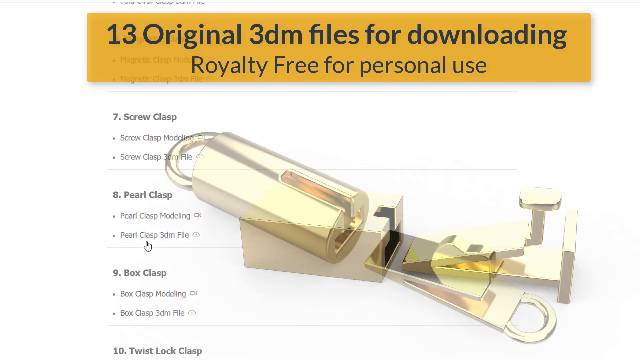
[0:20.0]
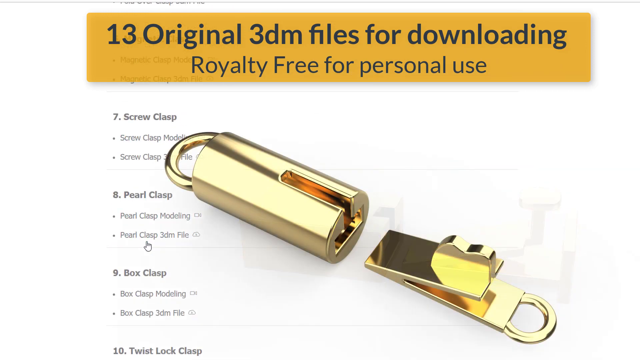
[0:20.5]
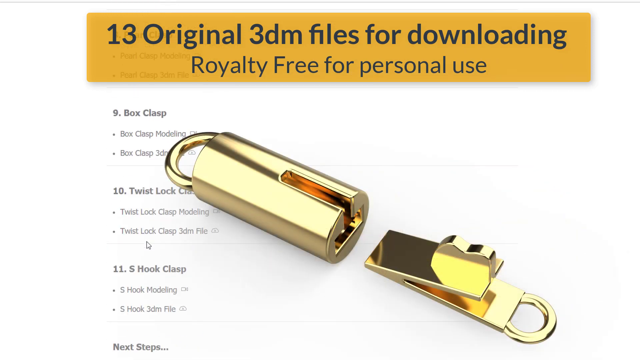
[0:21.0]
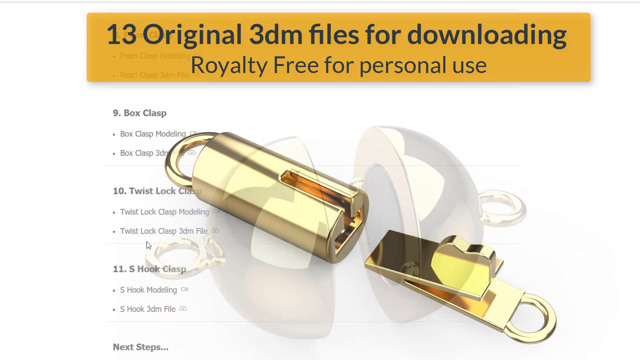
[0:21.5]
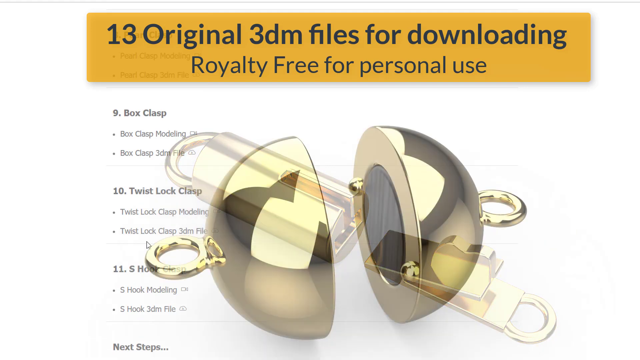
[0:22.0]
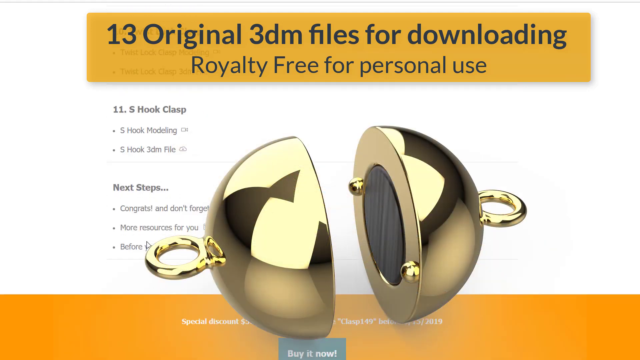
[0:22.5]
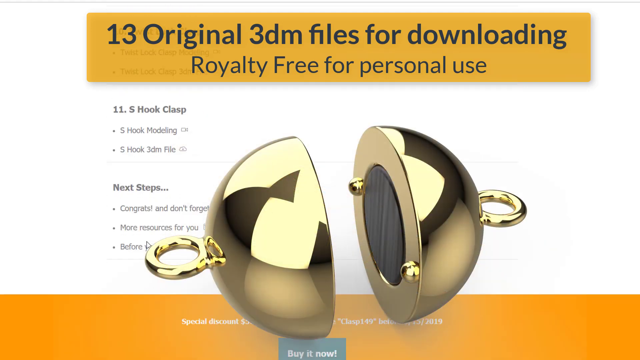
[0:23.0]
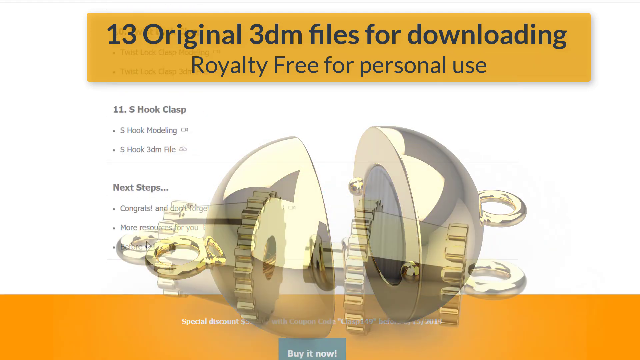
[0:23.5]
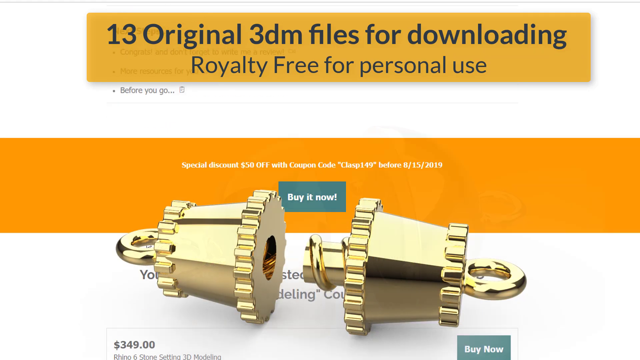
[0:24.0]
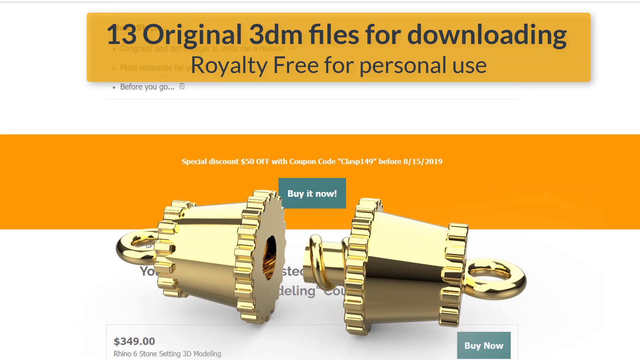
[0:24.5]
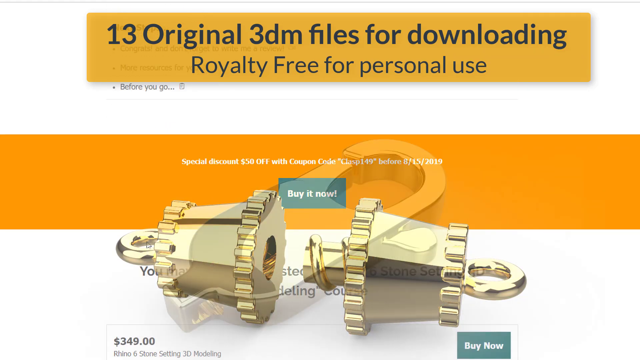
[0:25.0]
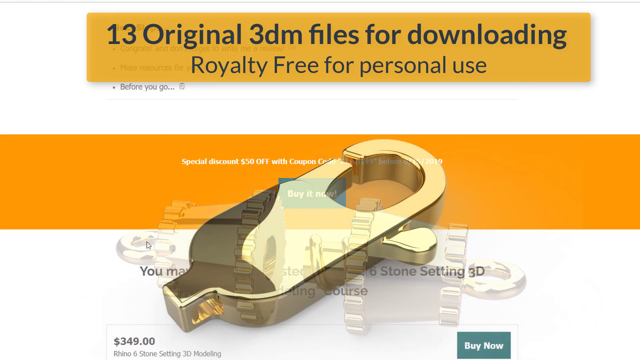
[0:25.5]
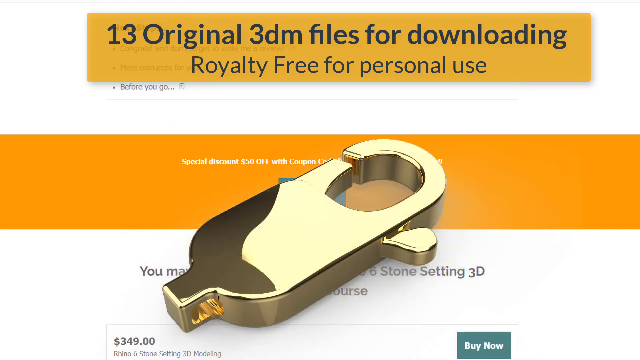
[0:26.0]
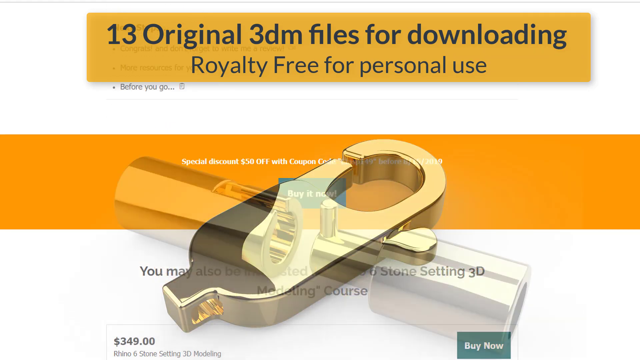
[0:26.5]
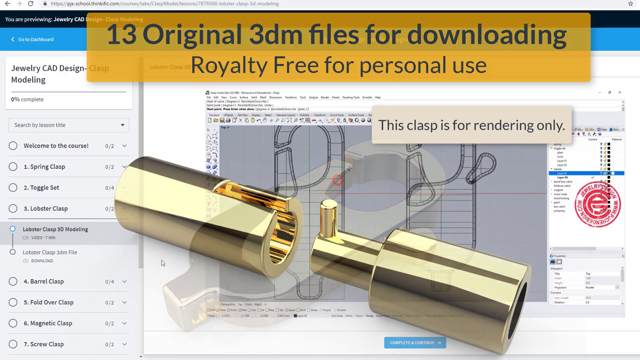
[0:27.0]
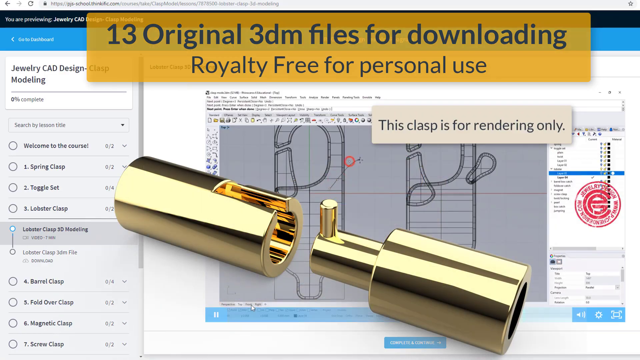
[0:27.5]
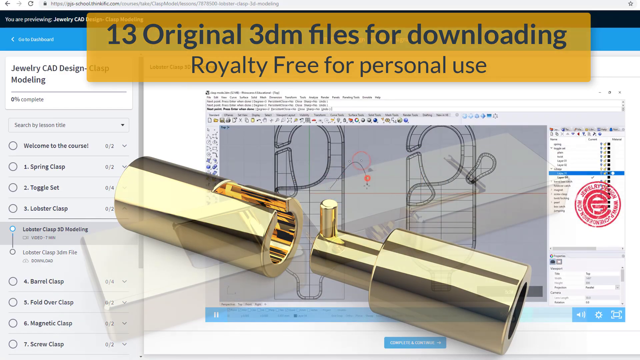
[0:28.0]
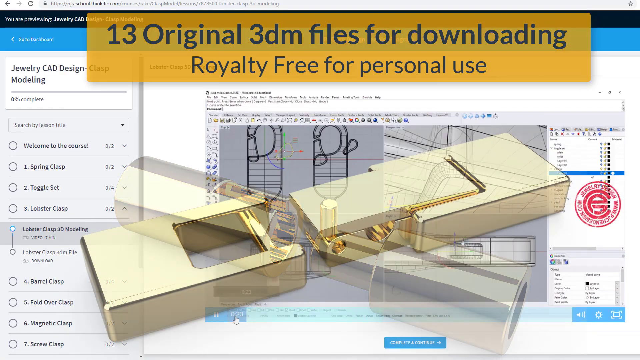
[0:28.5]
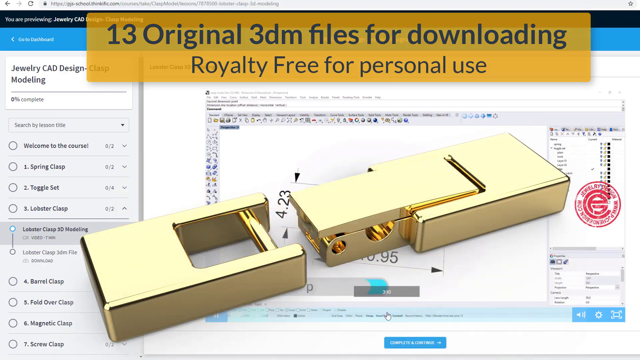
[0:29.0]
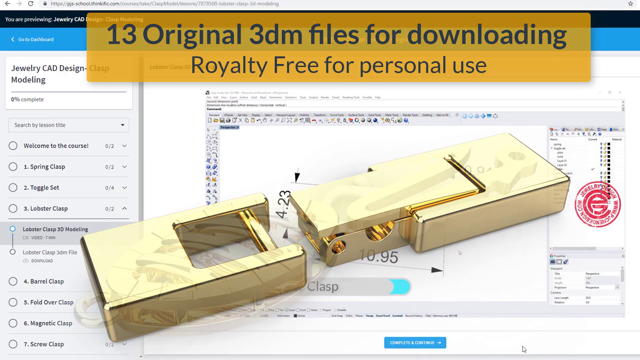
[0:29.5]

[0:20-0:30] Text at the top of the screen reads "13 original 3DM files for downloading, royalty-free for personal use." The website scrolls through the titles of files available for download, including number 7, Screw Clasp; number 8, Pearl Clasp; number 9, Box Clasp; number 10, Twist Lock Clasp; and 11, S-Hook Clasp. Clasps featured on the right side of the screen are polished-looking brass jewelry clasps. Another screen shows one of the clasps in two parts that look like they screw together in the middle. The middle of the screen reads "Special Discount $50 off with coupon code CLASP149 before 8-15-2019," with a Buy It Now button underneath. The view then changes to the website itself, with a title reading "this clasp is for rendering only," followed by the CAD design, a downloadable file for making the various clasps.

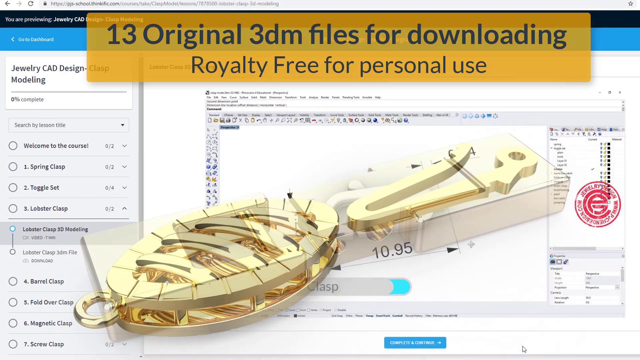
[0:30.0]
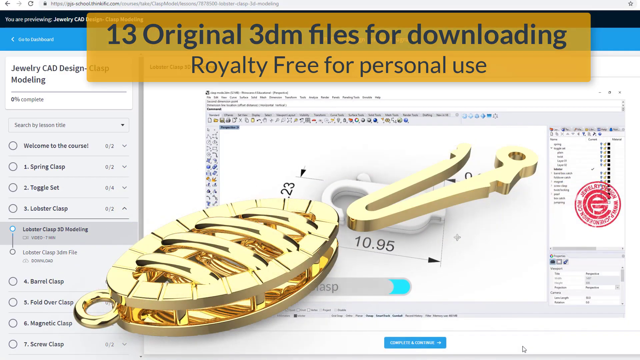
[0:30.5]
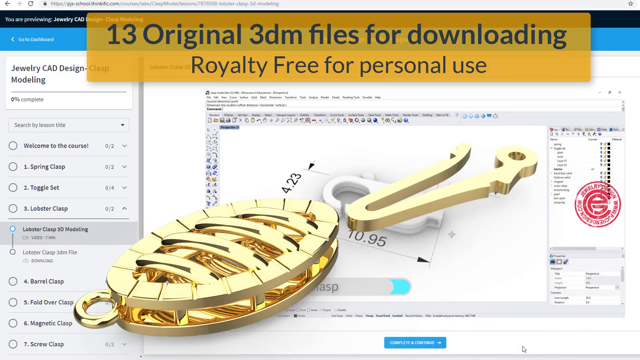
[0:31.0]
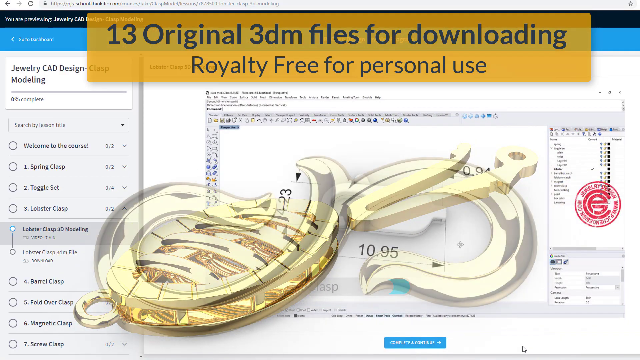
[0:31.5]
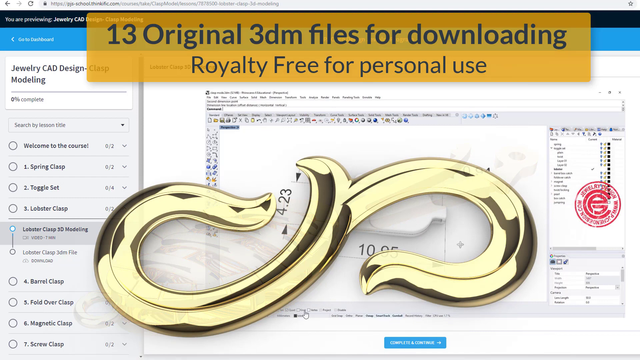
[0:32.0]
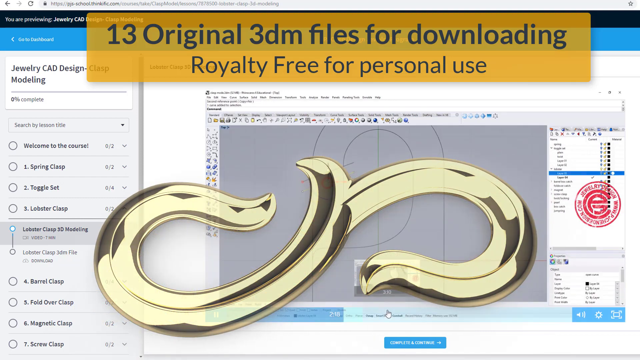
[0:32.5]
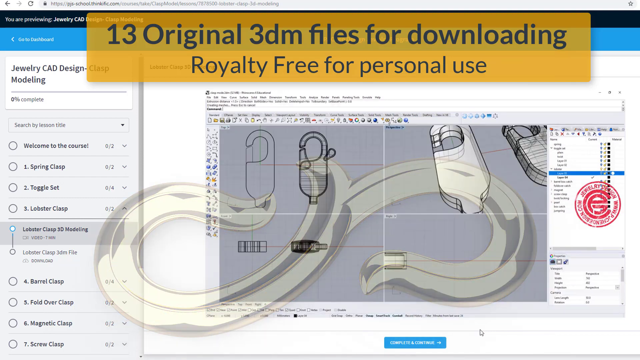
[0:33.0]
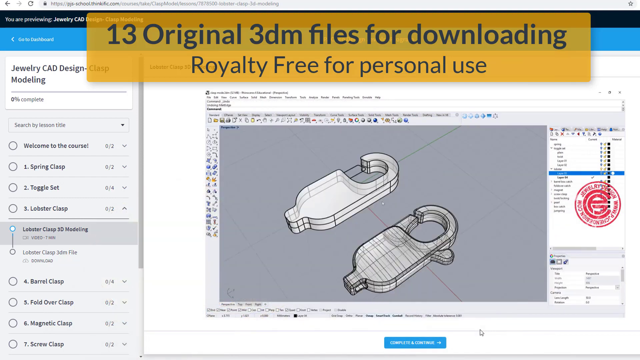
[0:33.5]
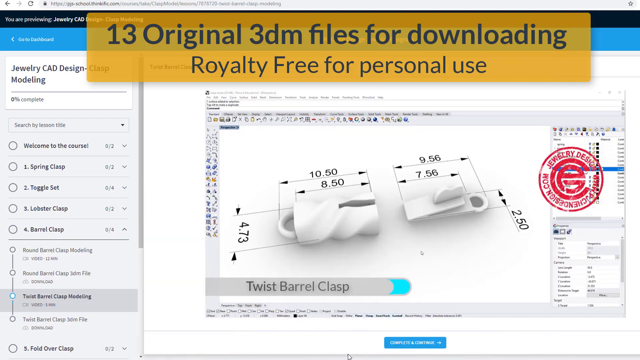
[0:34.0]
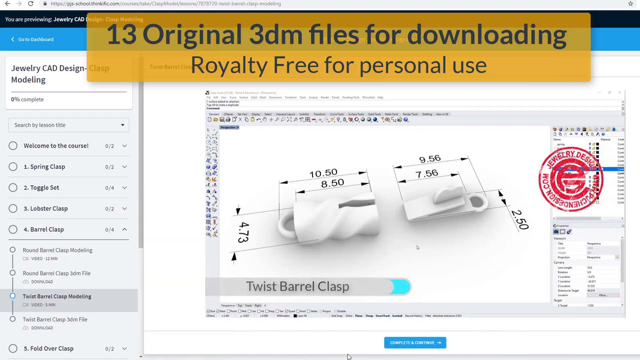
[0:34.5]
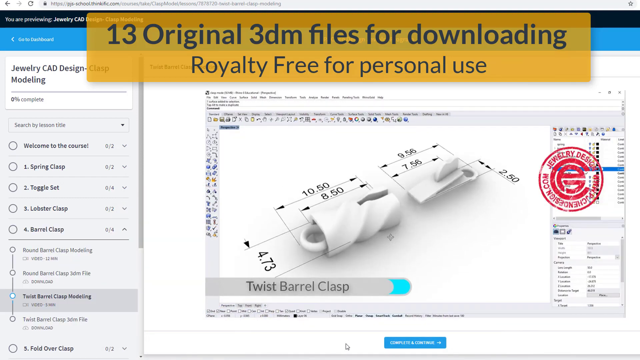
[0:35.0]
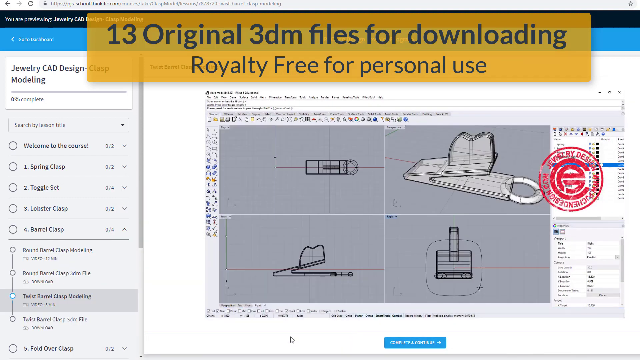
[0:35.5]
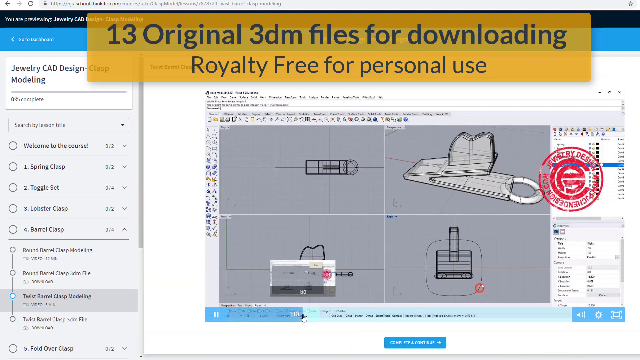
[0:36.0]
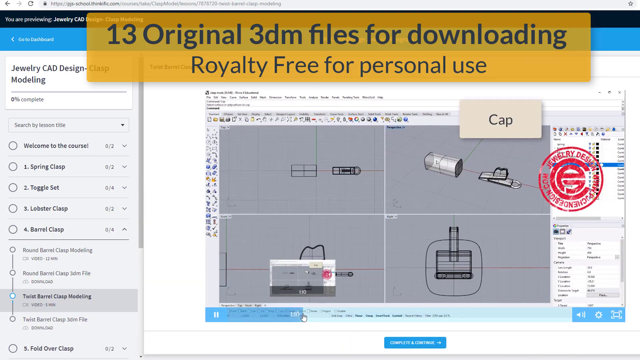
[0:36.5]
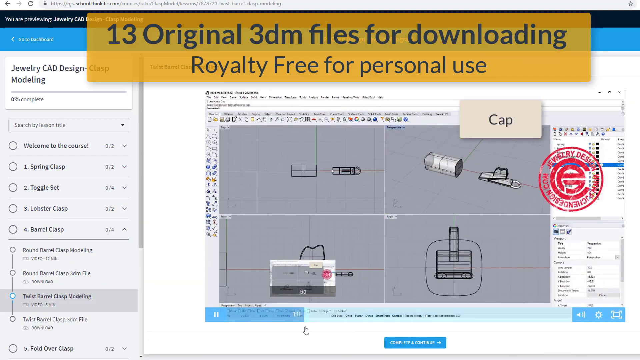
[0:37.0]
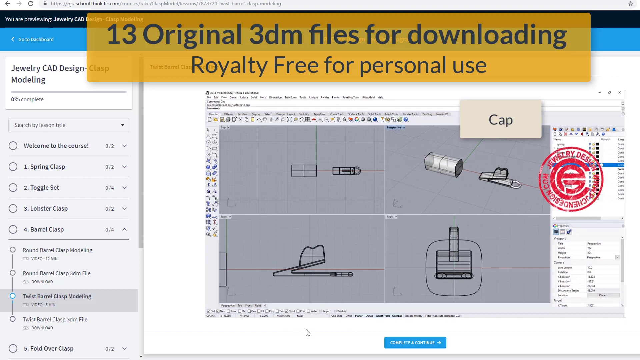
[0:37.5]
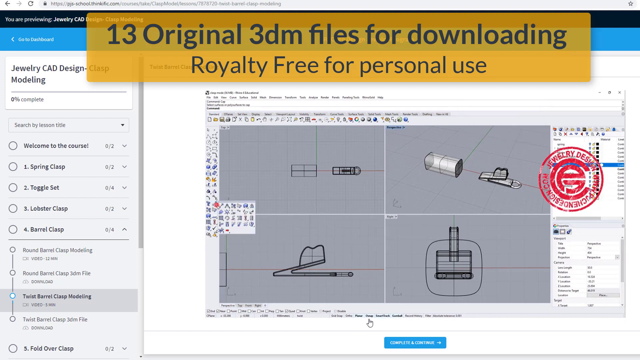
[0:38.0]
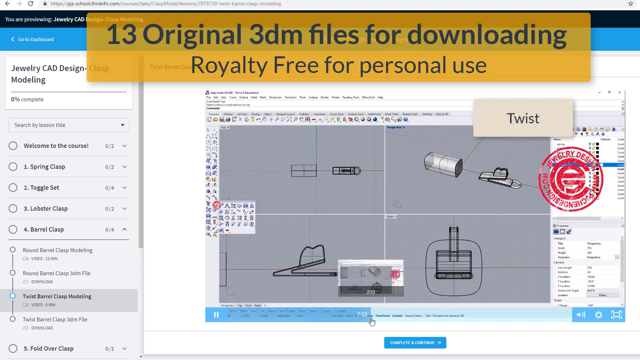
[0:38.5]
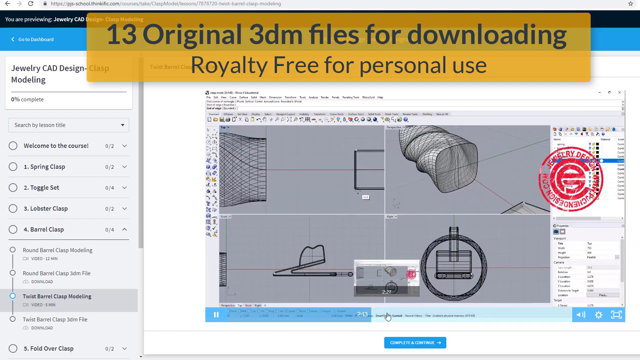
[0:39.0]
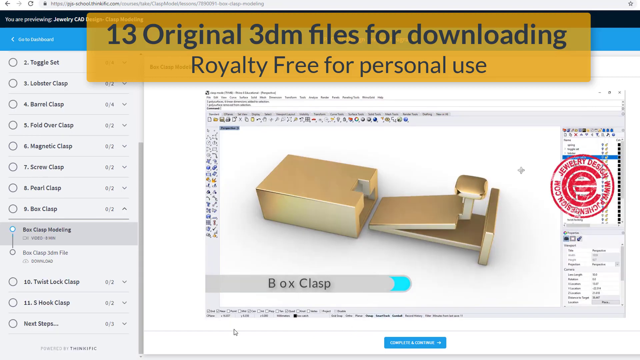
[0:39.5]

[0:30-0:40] Text at the top of the screen reads "13 original 3DM files for downloading, royalty-free for personal use," with the website behind it. The title at the upper left reads "Jewelry CAD Design Clasp Modeling." A brass clasp is in the middle of the screen, and different types of clasps cycle through, with the modeling rendering, apparently the 3D model software, in the background. A full-screen view then shows a twist barrel clasp with its dimensions in the background. On the left are several radio buttons for different clasps; going down, they begin with "welcome to the course," then one spring clasp, two toggle clasp, toggle set, three lobster clasp and four barrel clasp. The 3D rendered models are shown in the center of the screen as the video cycles through the different clasps available to download.